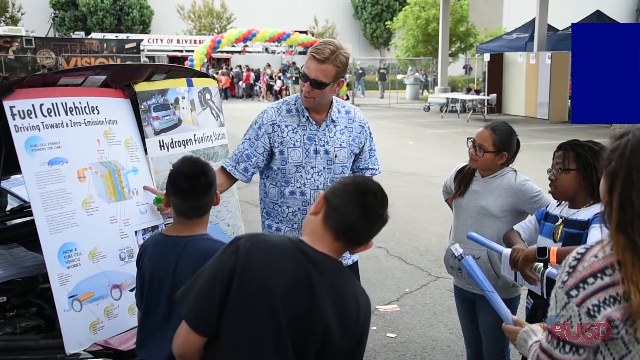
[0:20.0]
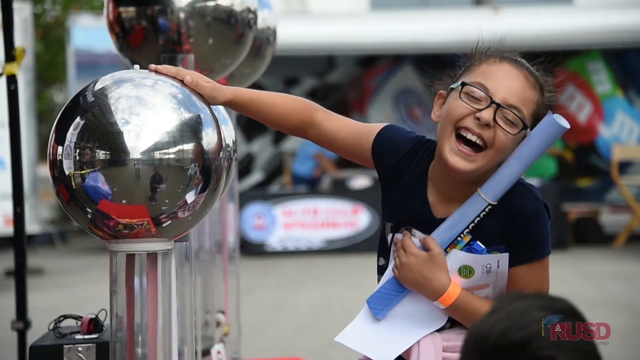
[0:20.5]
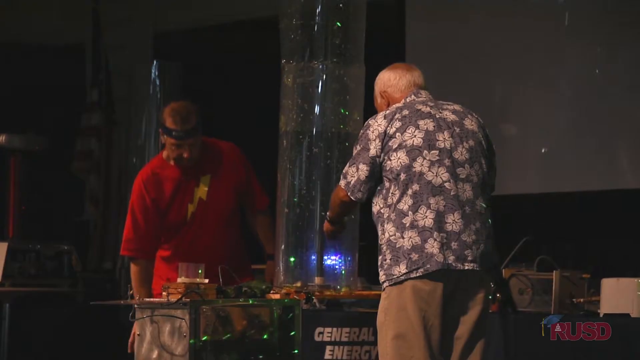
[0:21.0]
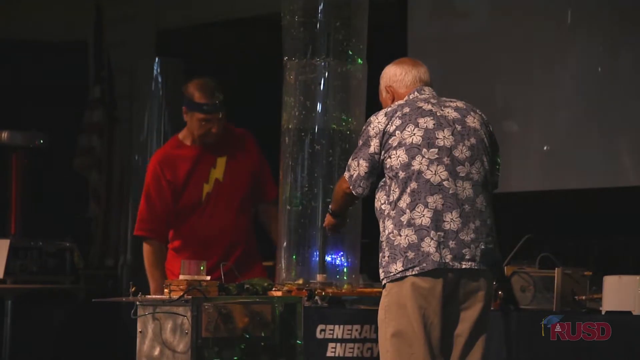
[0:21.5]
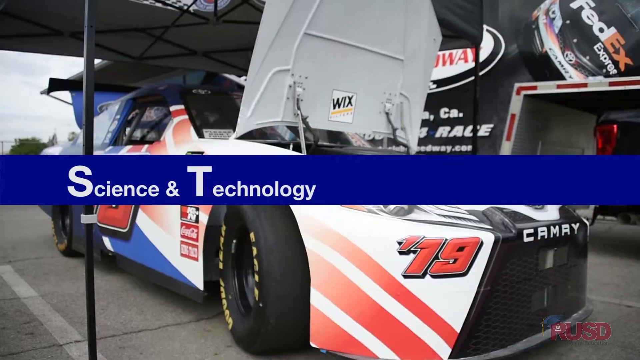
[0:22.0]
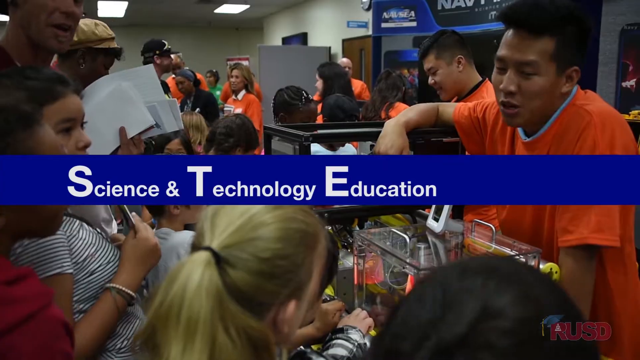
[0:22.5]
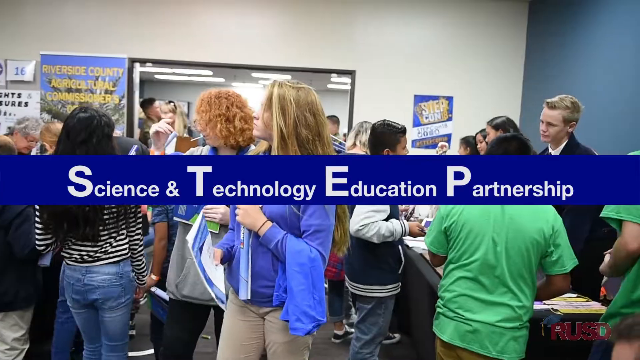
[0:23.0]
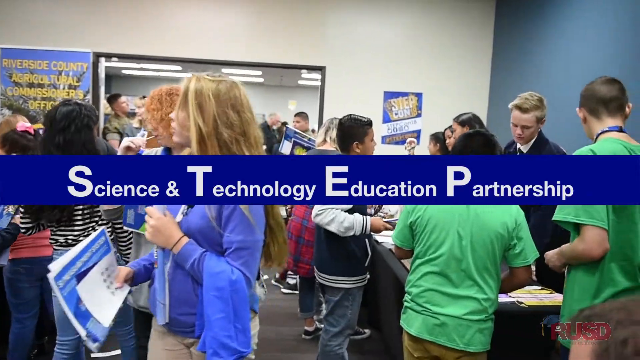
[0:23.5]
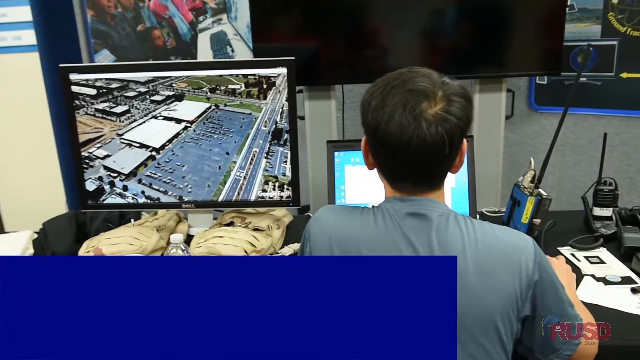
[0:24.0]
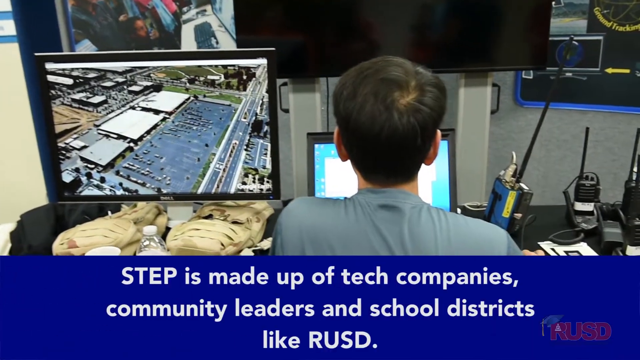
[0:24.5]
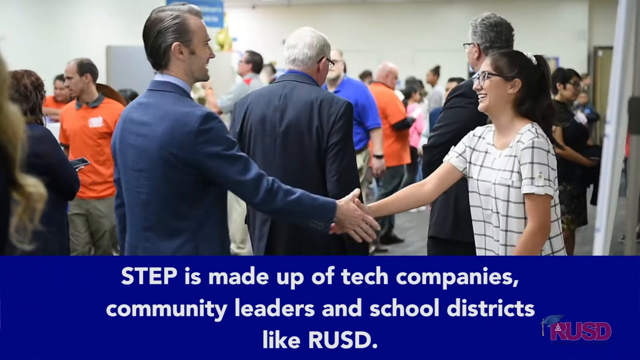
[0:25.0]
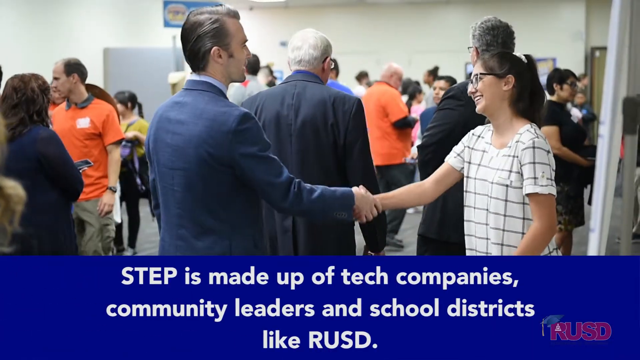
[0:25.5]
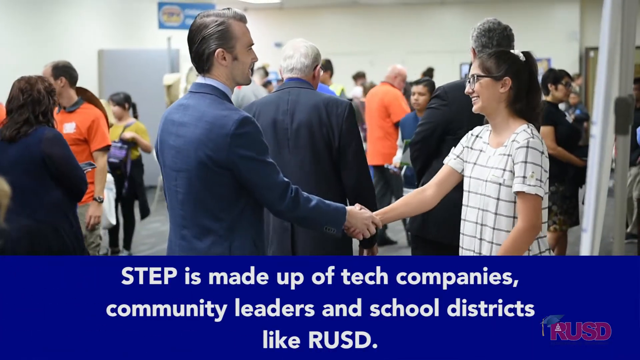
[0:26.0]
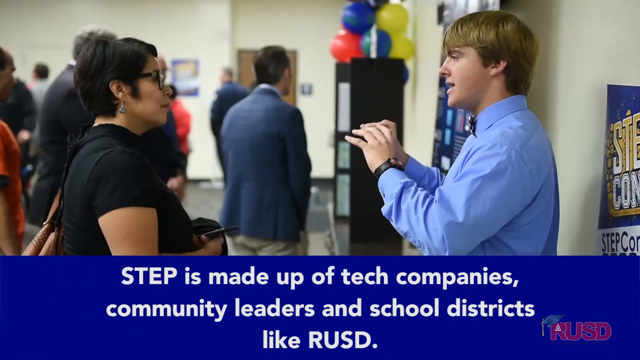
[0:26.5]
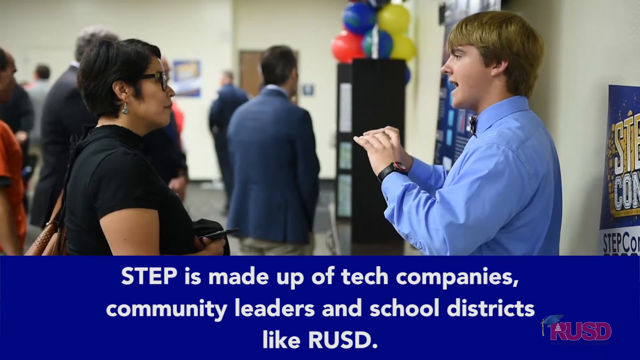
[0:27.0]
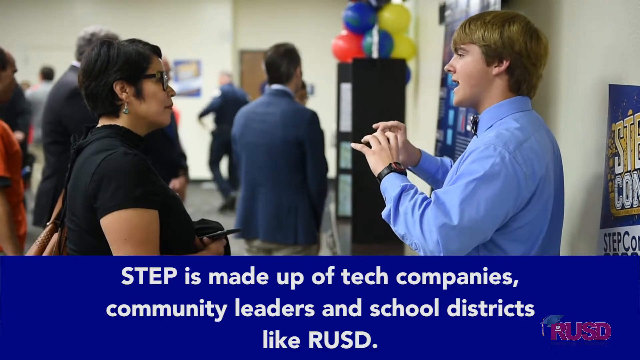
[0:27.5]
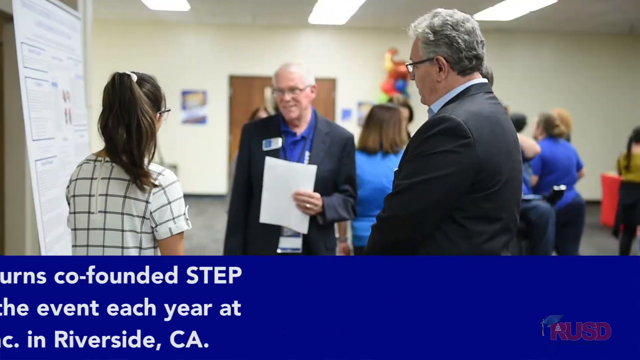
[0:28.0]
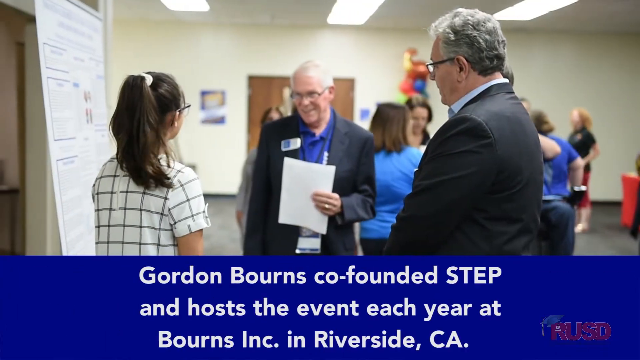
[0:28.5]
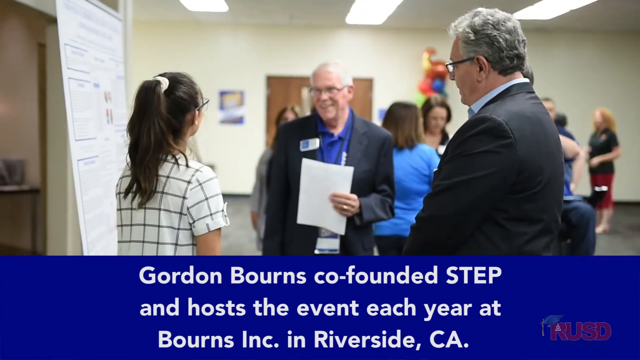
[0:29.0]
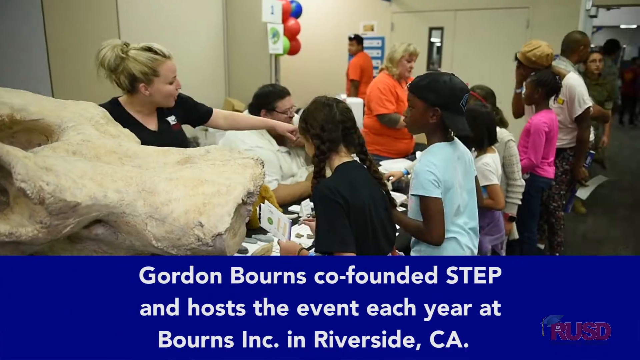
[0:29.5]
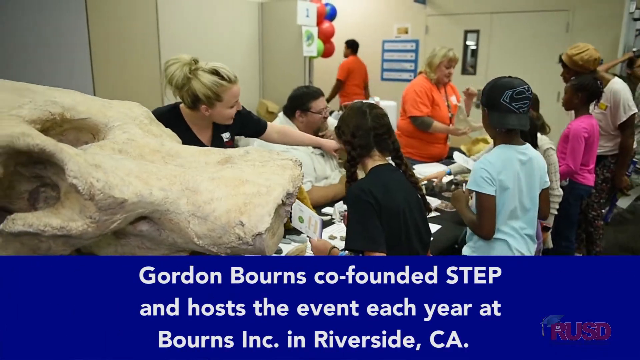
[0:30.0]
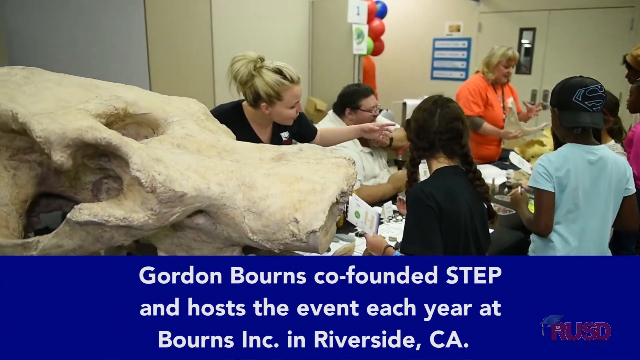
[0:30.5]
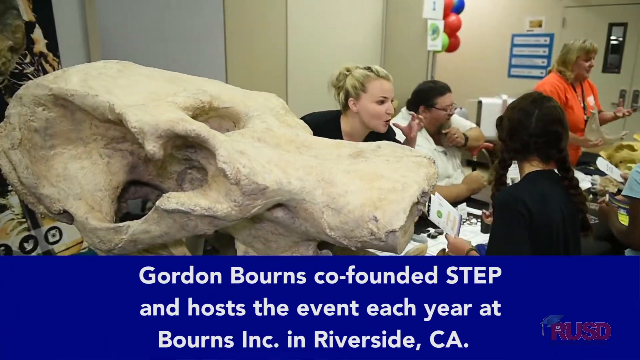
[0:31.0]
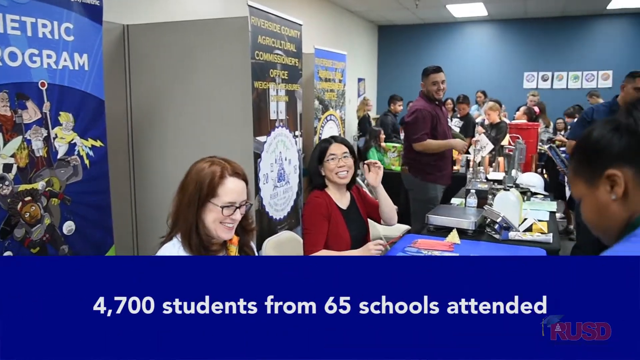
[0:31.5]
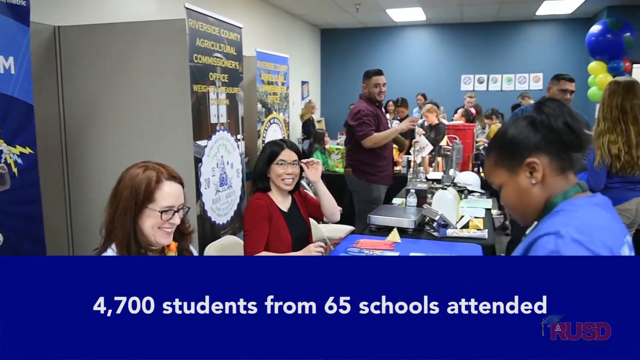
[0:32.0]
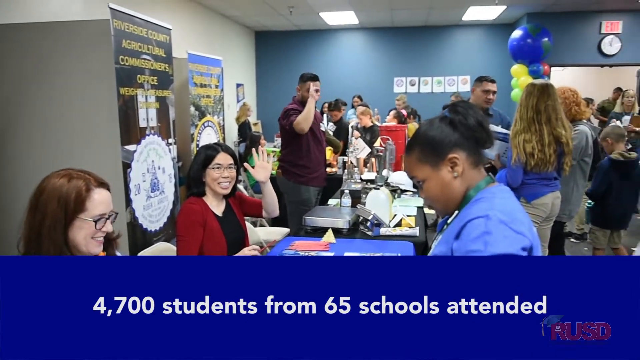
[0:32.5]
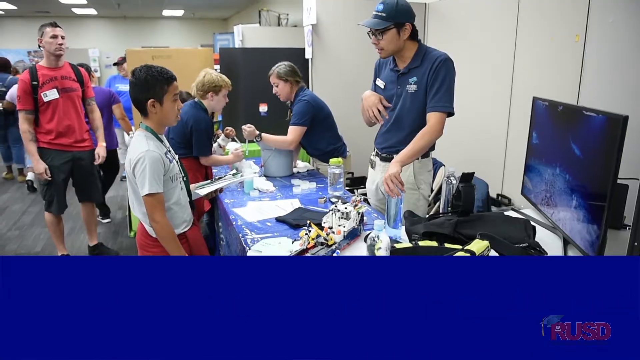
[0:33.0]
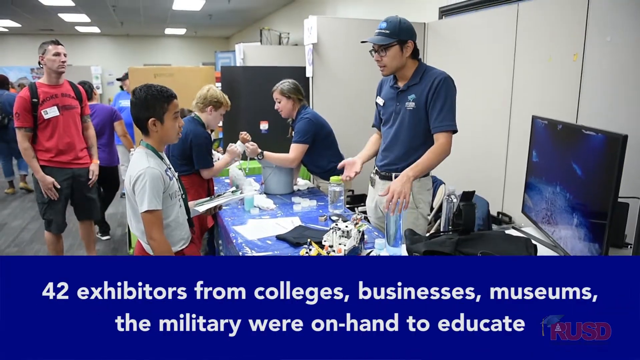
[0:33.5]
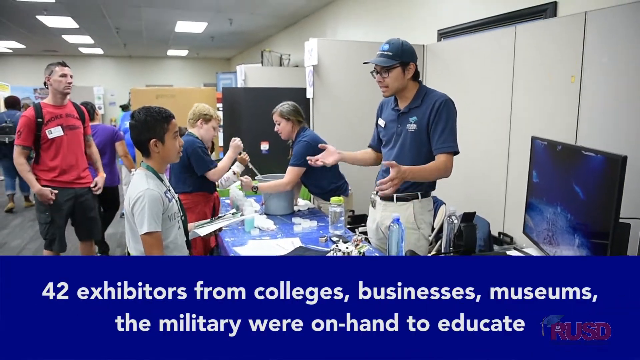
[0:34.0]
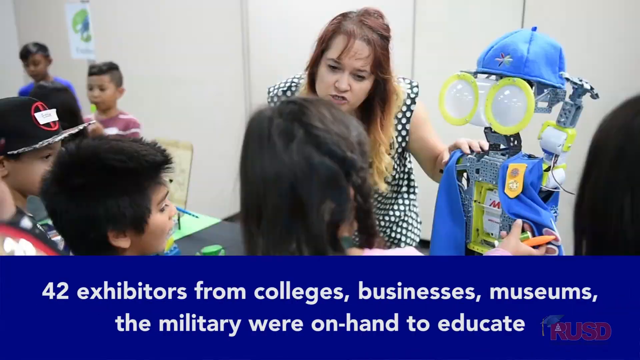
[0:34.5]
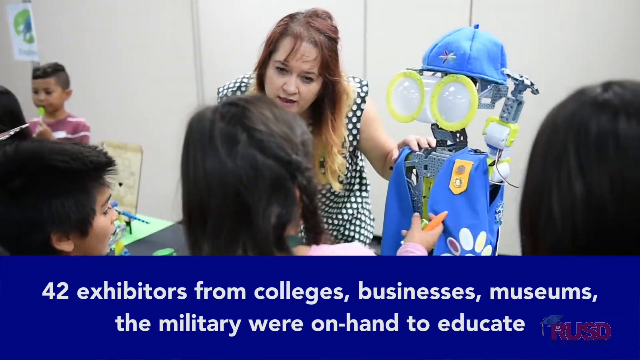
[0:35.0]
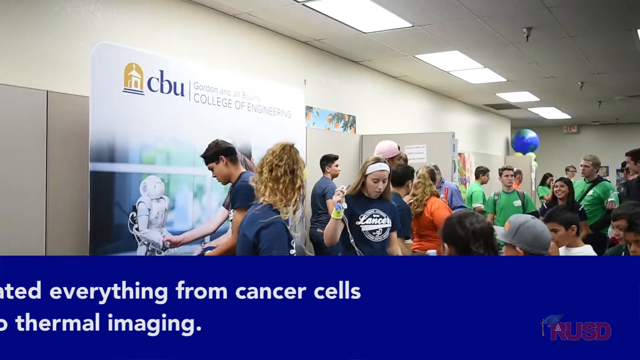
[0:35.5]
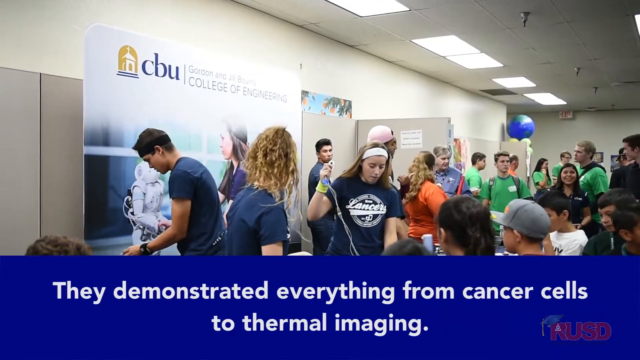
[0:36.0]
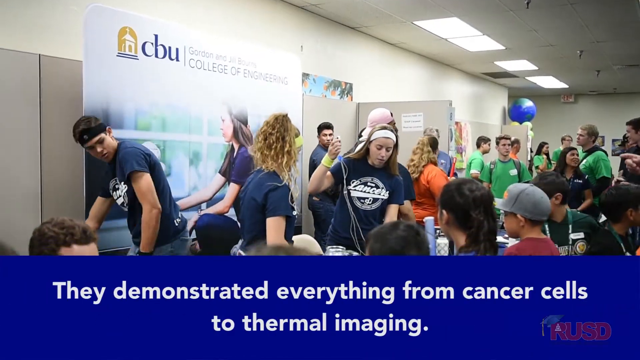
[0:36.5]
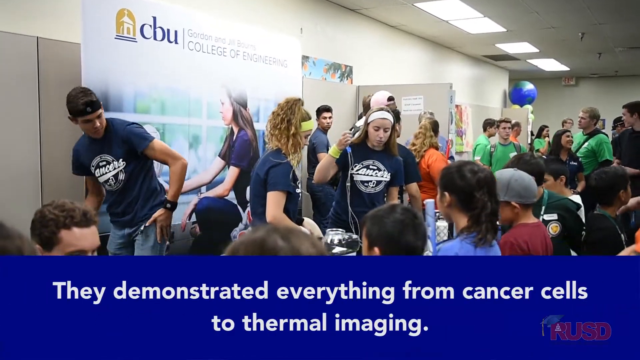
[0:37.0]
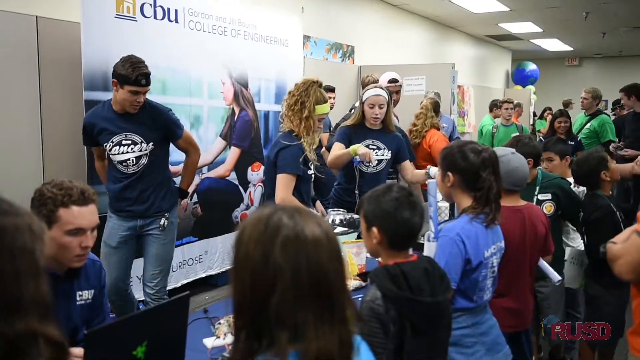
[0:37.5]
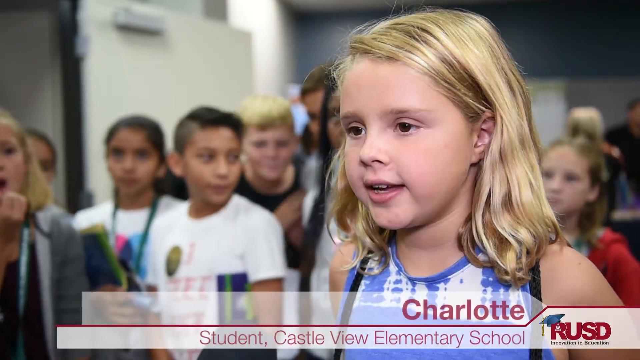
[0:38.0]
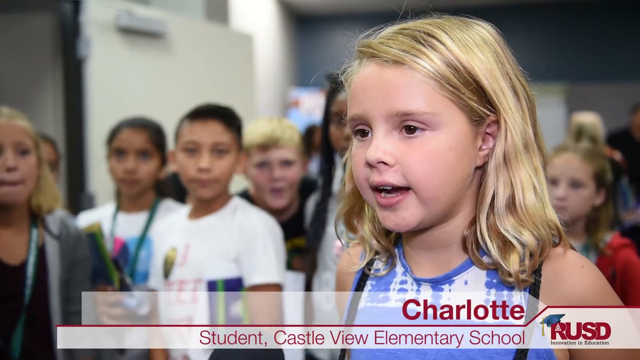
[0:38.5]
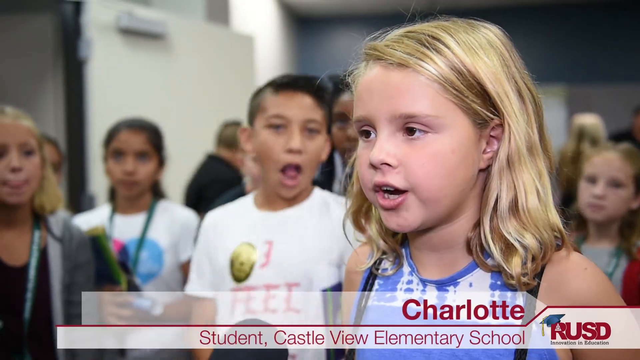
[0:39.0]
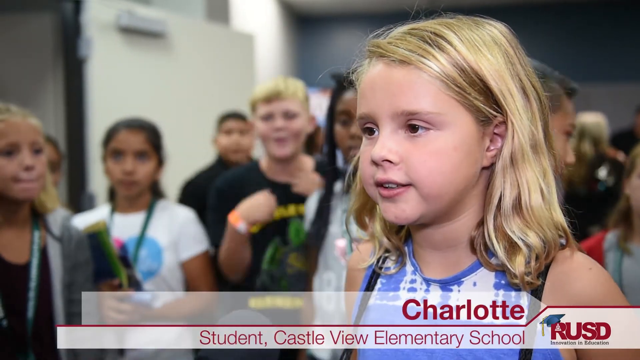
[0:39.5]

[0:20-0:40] The event takes place over the course of eight days. Students mill around, going to different exhibition booths and asking questions. Science experiments are being conducted, such as electricity running through water. The event, called STEP, is made up of tech companies, community leaders and school district faculty members, and is hosted at Borns Incorporated in Riverside, California. Some students look at fossils of what look like dinosaurs. 700 students have attended this year, and 42 exhibitors from colleges, businesses and museums are on hand to educate, demonstrating everything from cancer cells to thermal imaging. A small child named Charlotte then gives commentary.